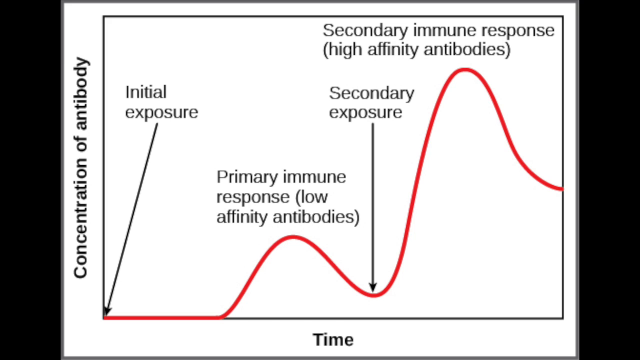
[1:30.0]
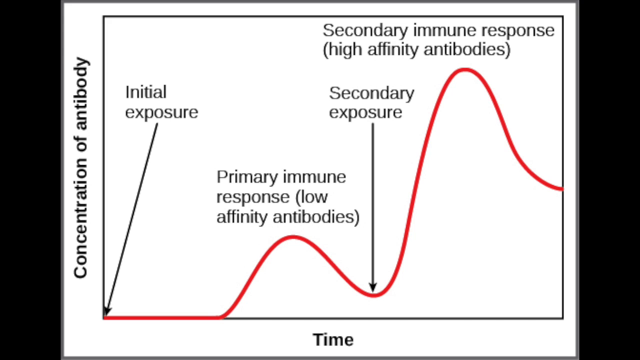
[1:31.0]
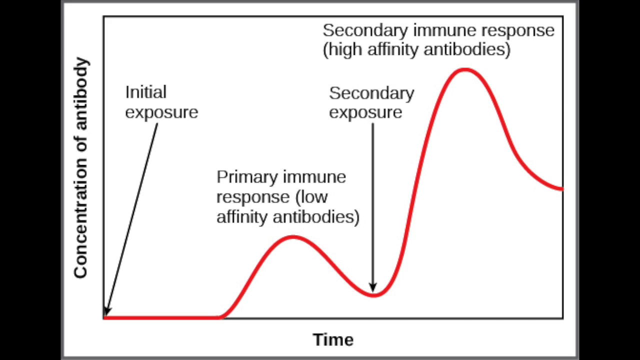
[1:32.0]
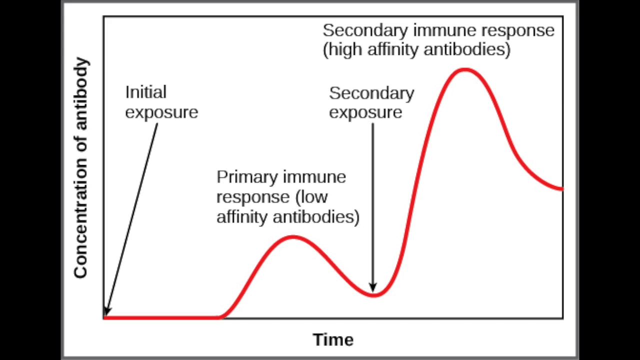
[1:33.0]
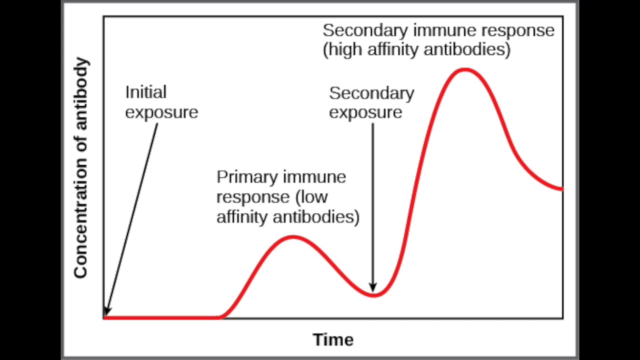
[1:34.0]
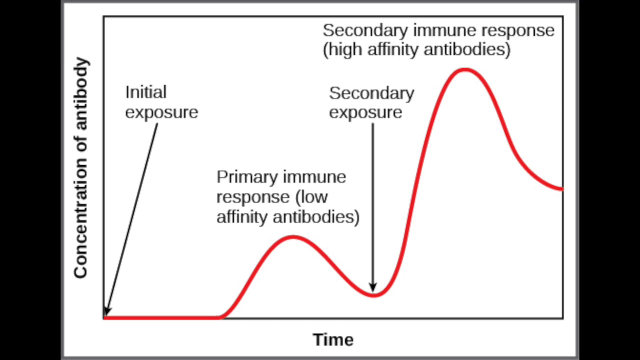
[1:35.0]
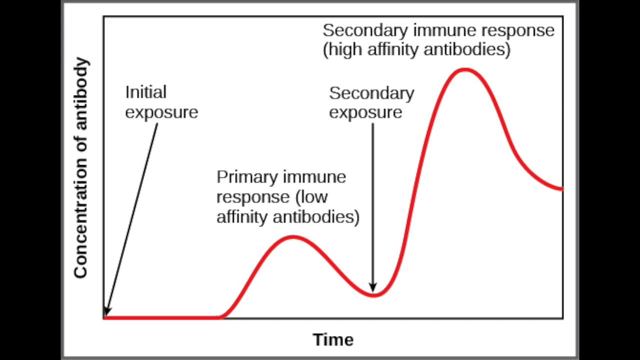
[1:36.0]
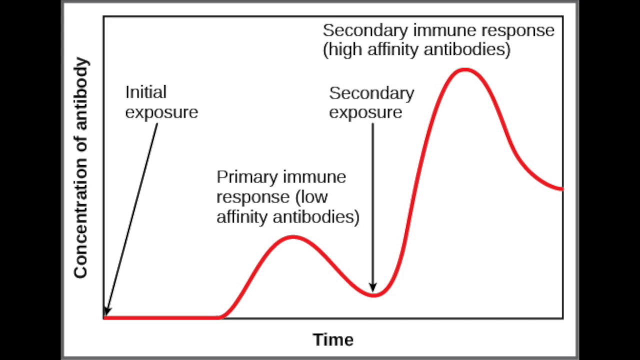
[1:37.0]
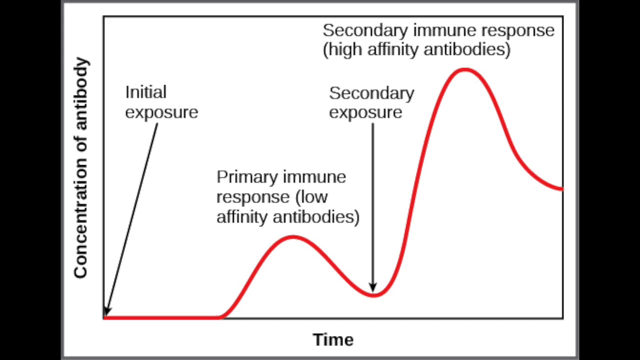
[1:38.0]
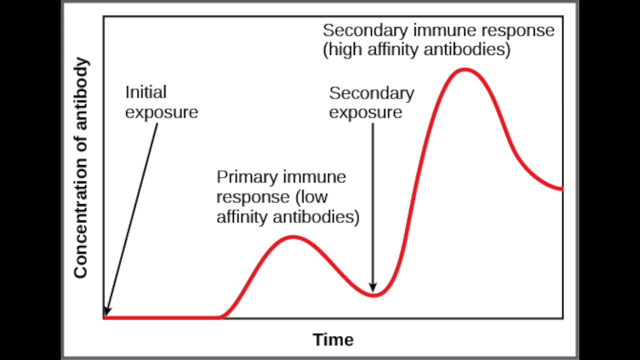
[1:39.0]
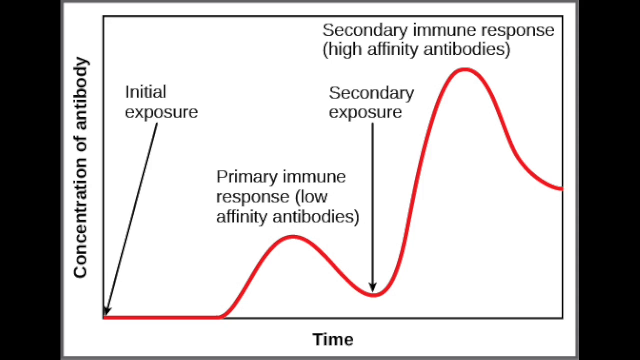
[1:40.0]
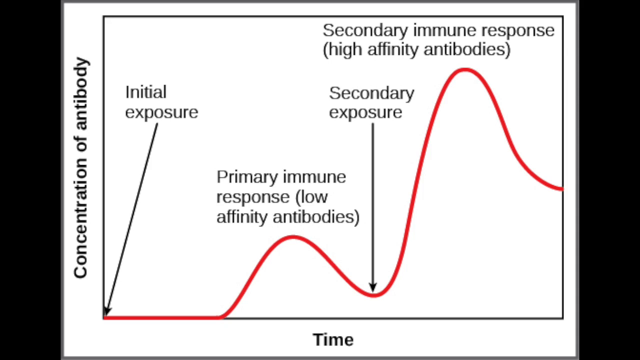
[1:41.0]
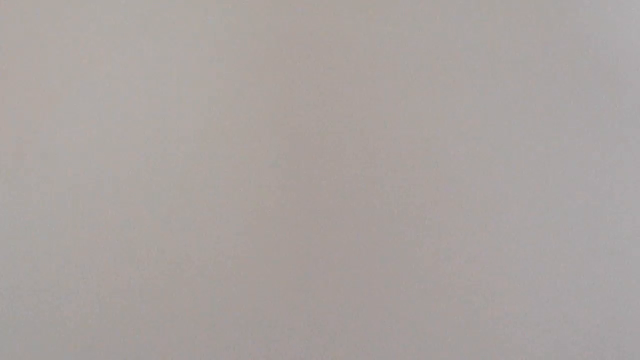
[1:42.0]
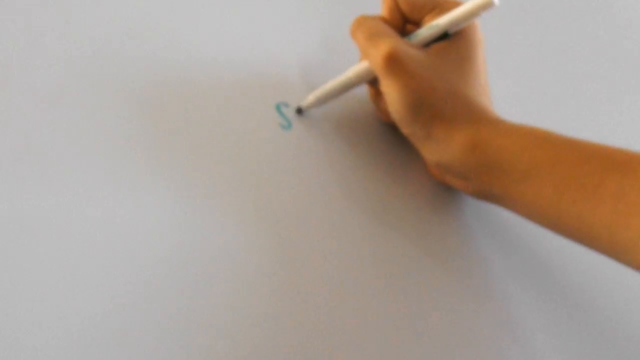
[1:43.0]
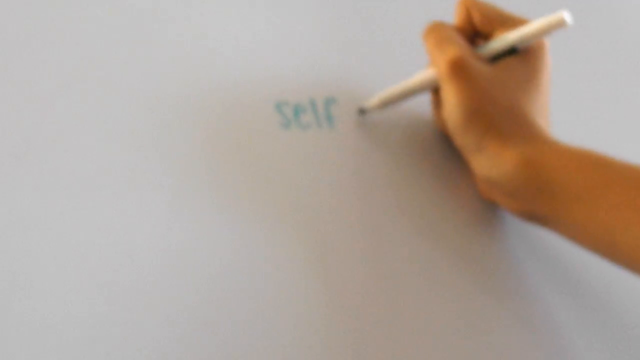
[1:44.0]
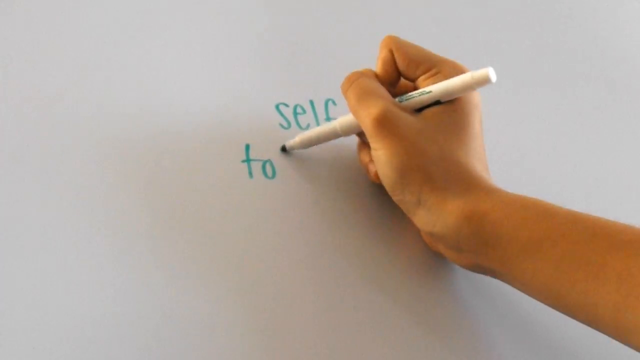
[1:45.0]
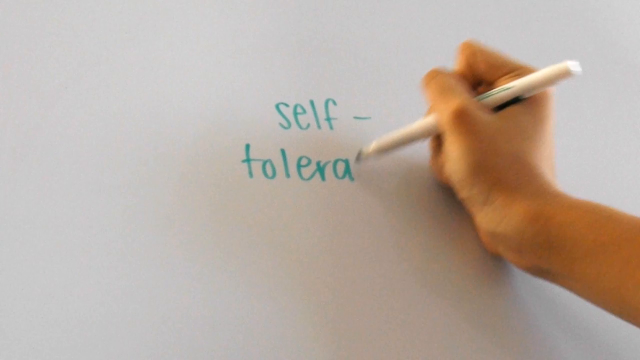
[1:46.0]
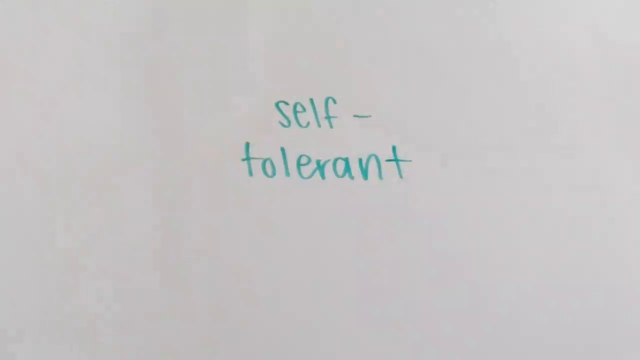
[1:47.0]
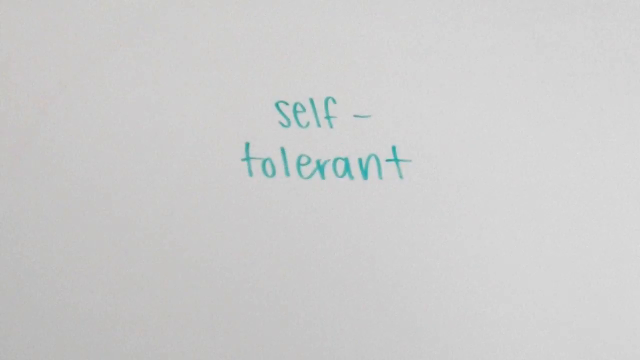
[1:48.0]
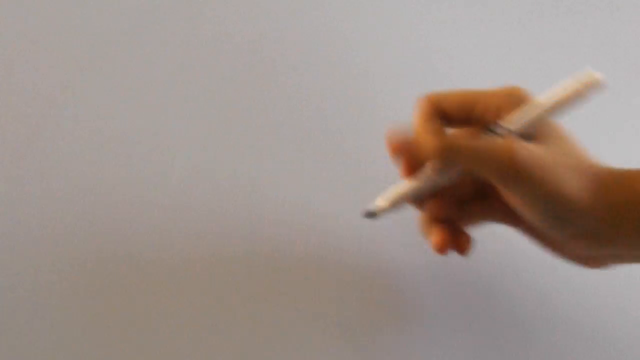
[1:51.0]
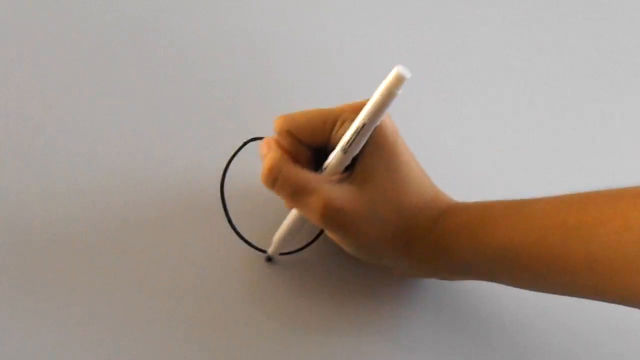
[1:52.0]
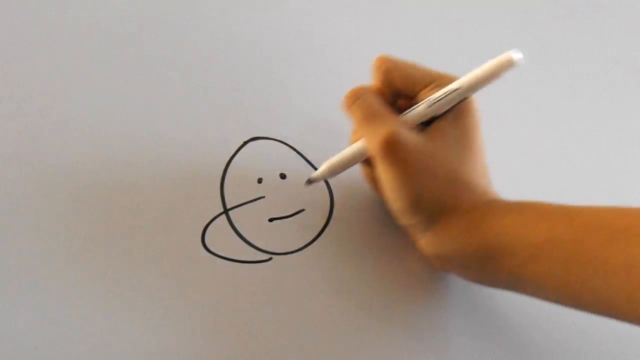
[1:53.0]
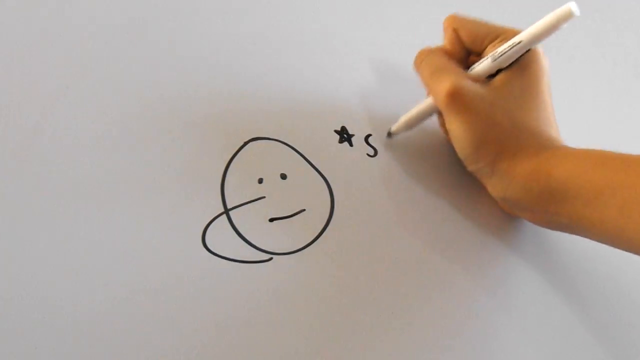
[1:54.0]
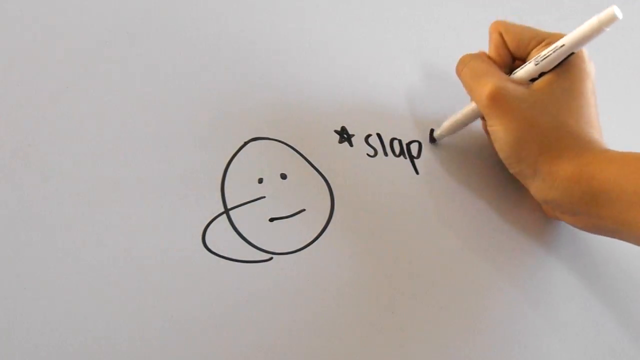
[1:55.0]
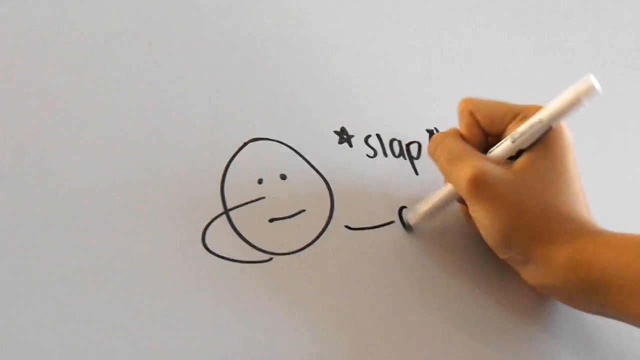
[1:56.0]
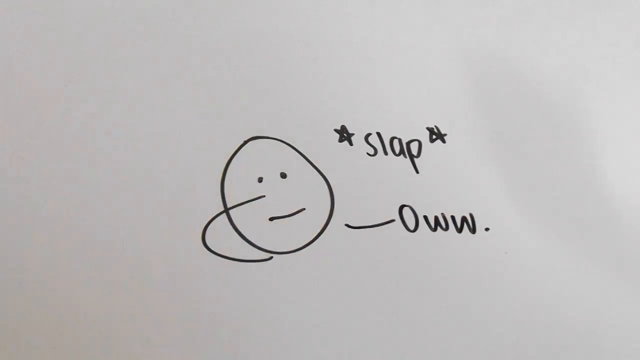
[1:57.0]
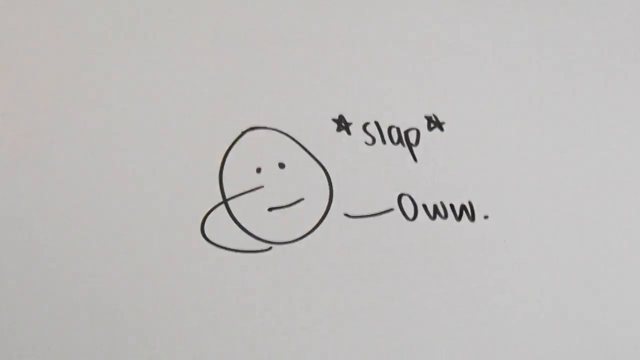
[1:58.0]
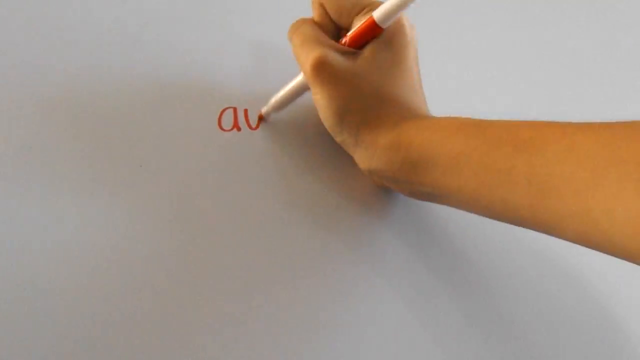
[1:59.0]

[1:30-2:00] The graph shown earlier is back: a black background with a white rectangle filling most of the middle of the screen. Inside it, the y-axis is labeled in black "concentration of antibody" and the x-axis "time". A red graph line looks like hills going up and down. It starts at the zero point where the x and y axes intersect and runs flat for about a third of the horizontal axis, then rises, not very high, peaks, and dips very low but not completely back to the horizontal axis. It then goes very high, apparently a little over three quarters of the way up the y-axis, and dips again to about the middle height of the y-axis. Labels read "secondary exposure" at the first dip and "initial exposure" with a line in the corner where the x and y axes cross. The shot cuts away and the hand returns with a light bluish pen, writing a dash and the word "self" on the first line and "tolerant" below it.